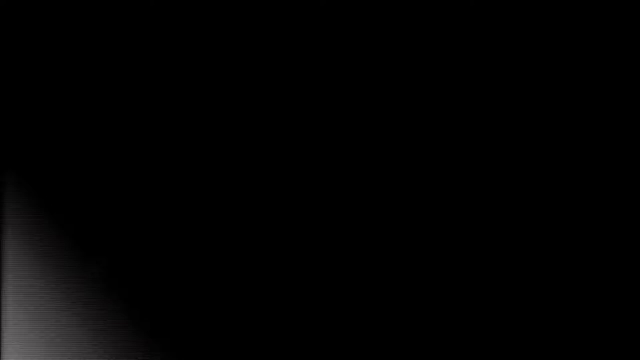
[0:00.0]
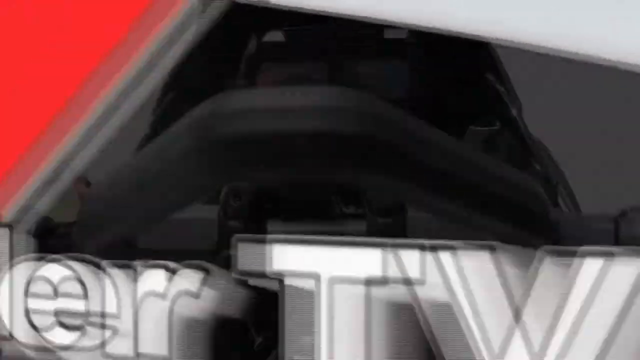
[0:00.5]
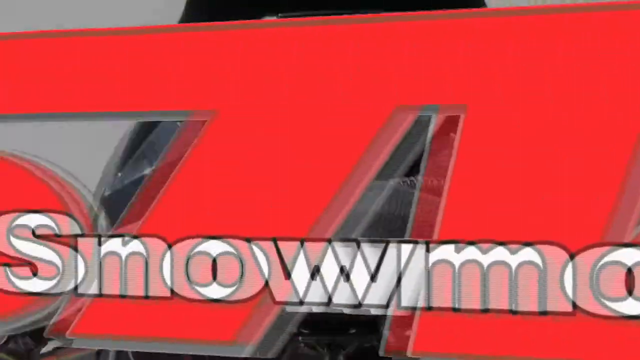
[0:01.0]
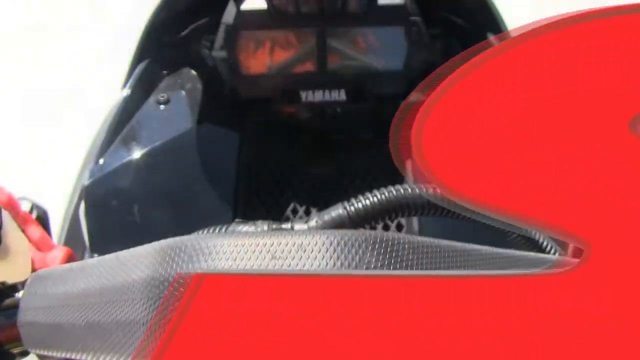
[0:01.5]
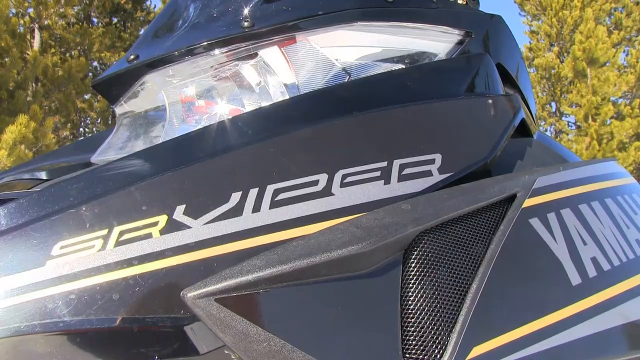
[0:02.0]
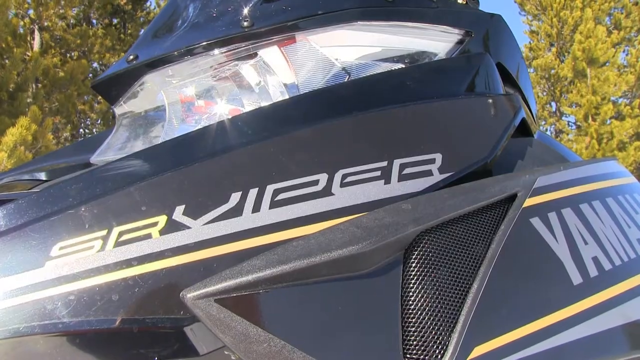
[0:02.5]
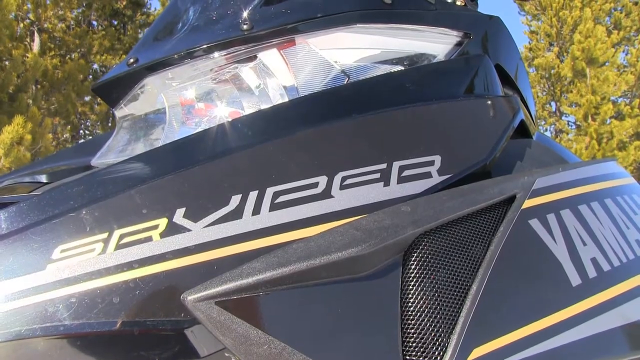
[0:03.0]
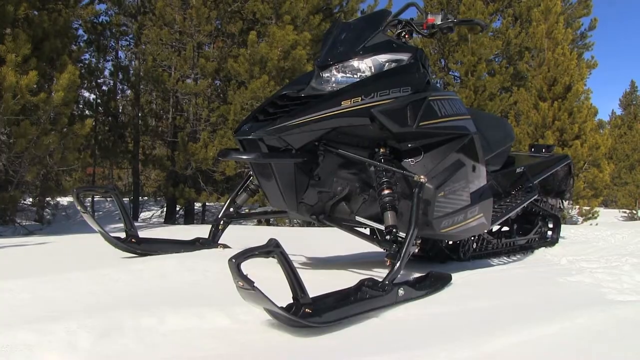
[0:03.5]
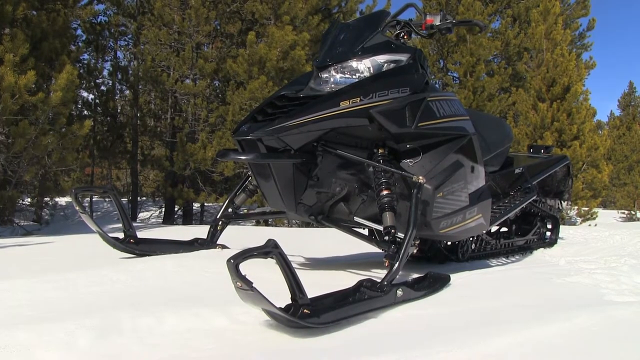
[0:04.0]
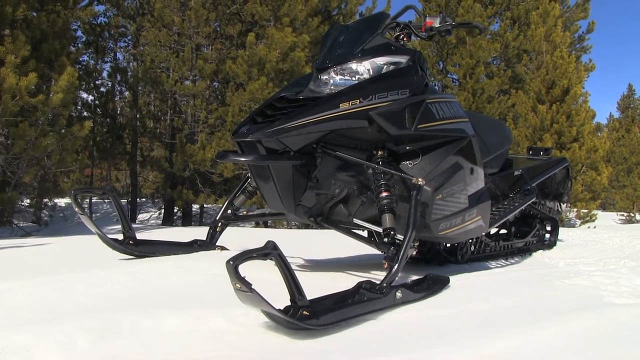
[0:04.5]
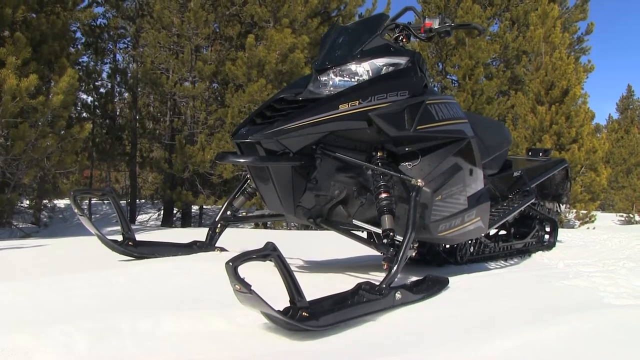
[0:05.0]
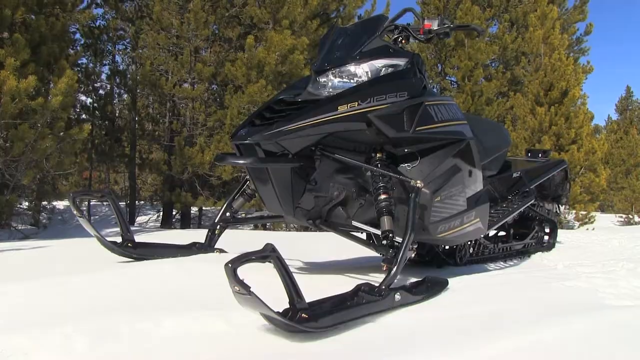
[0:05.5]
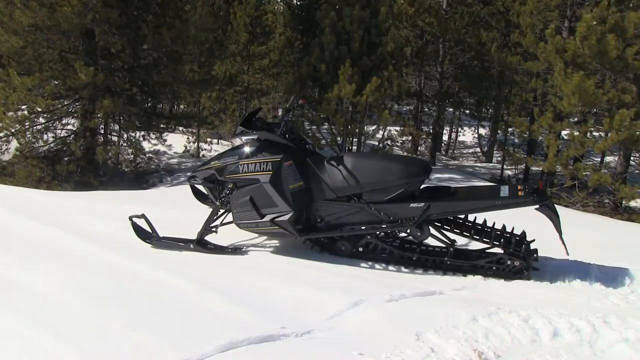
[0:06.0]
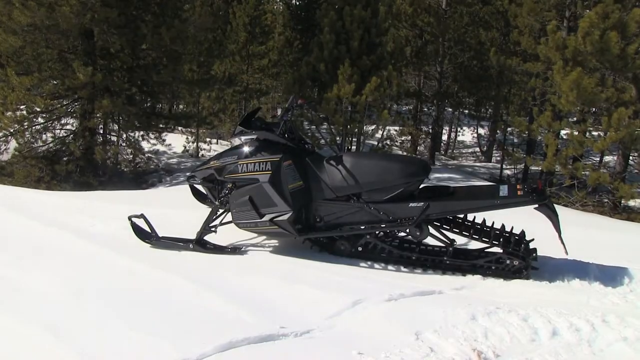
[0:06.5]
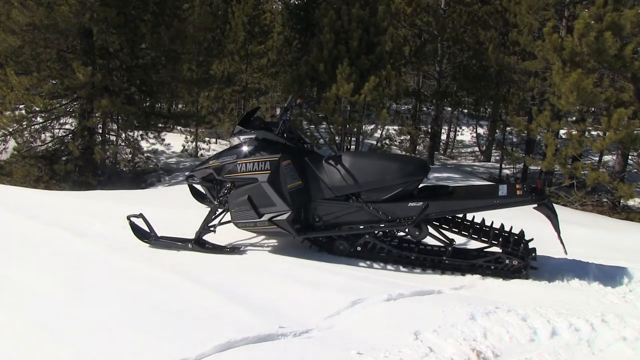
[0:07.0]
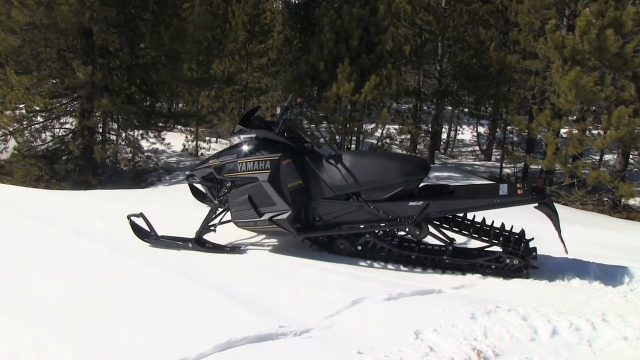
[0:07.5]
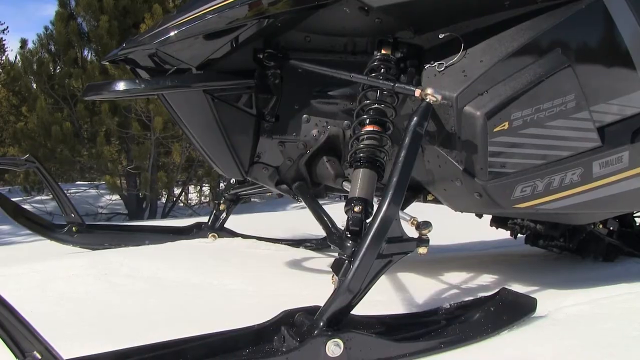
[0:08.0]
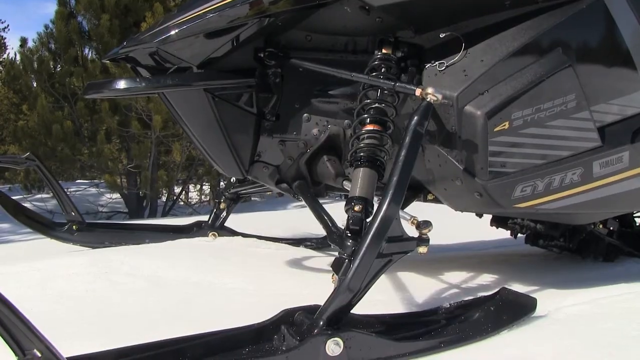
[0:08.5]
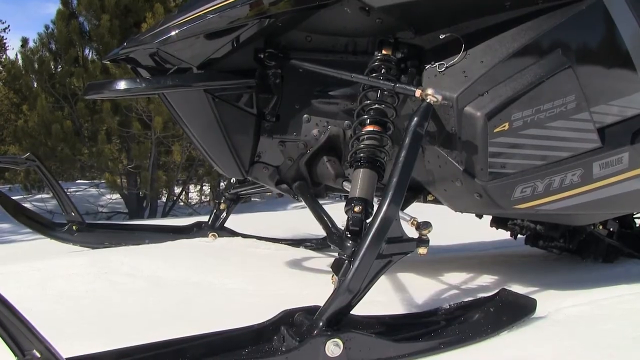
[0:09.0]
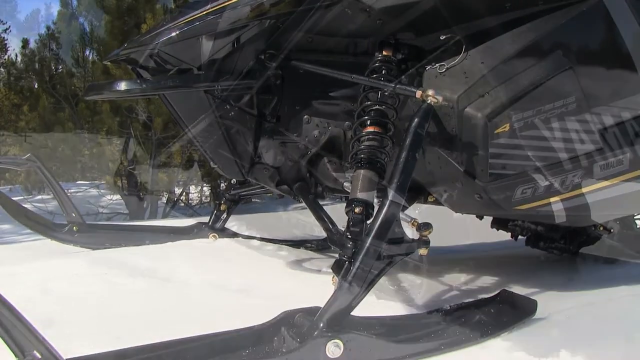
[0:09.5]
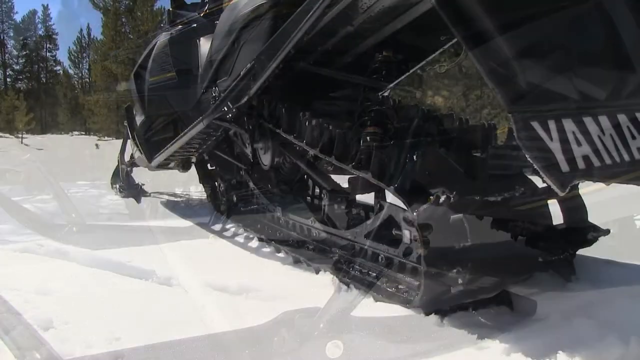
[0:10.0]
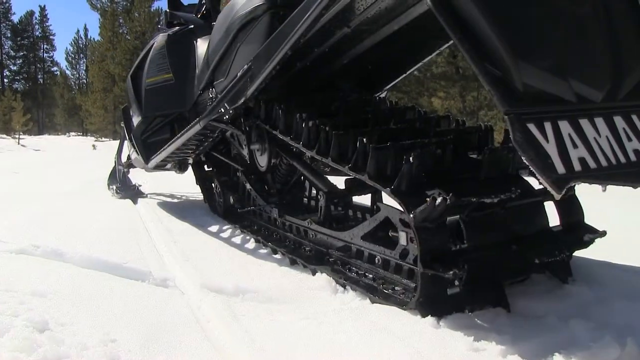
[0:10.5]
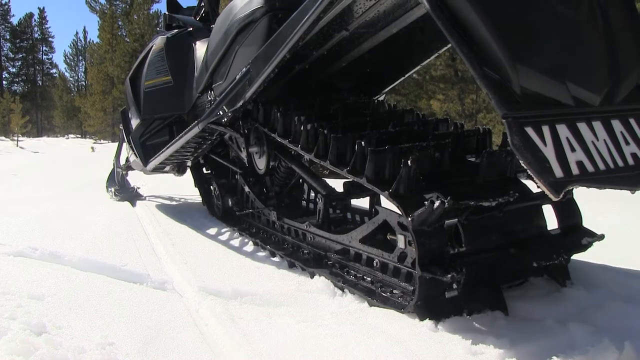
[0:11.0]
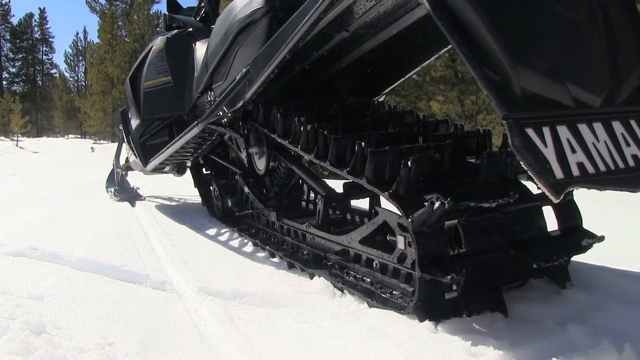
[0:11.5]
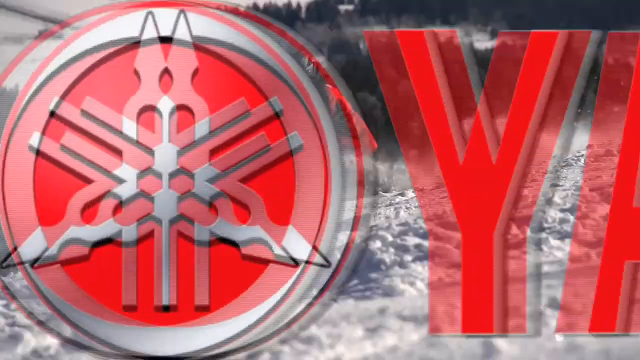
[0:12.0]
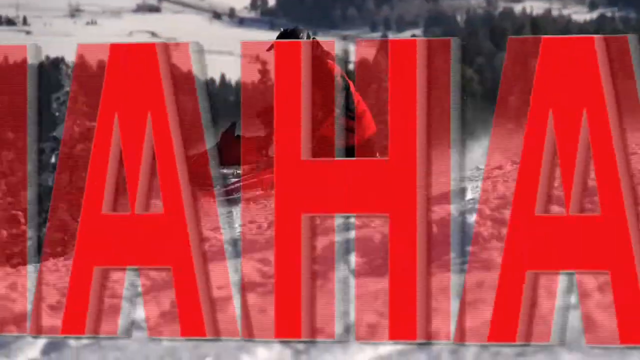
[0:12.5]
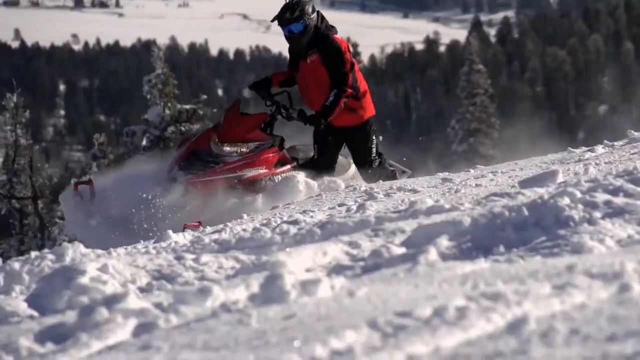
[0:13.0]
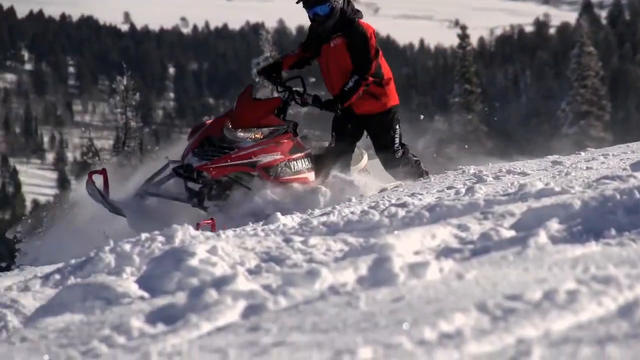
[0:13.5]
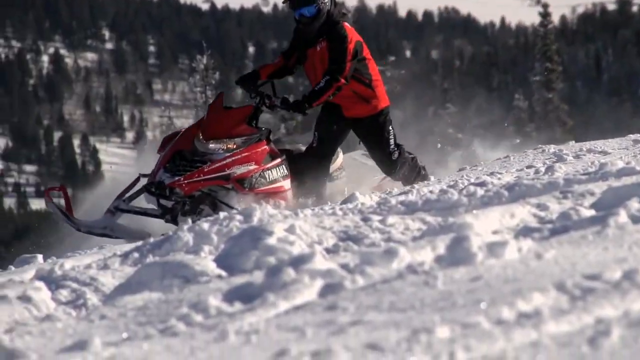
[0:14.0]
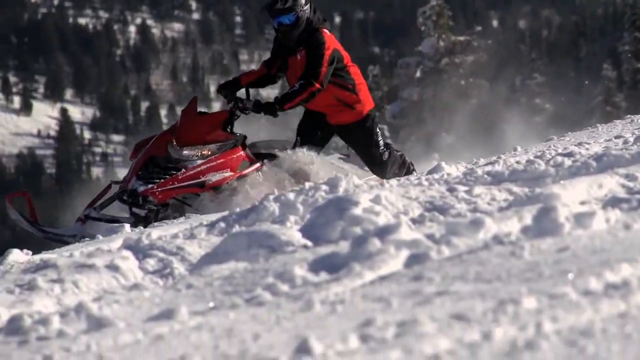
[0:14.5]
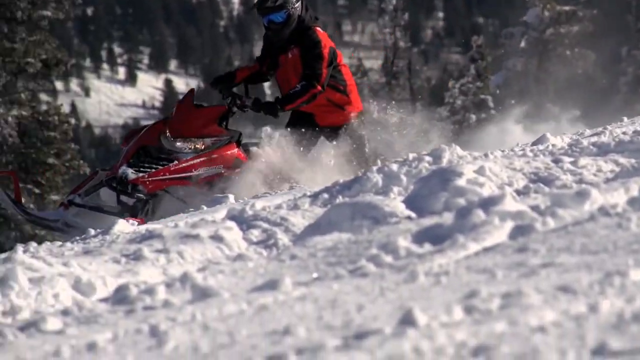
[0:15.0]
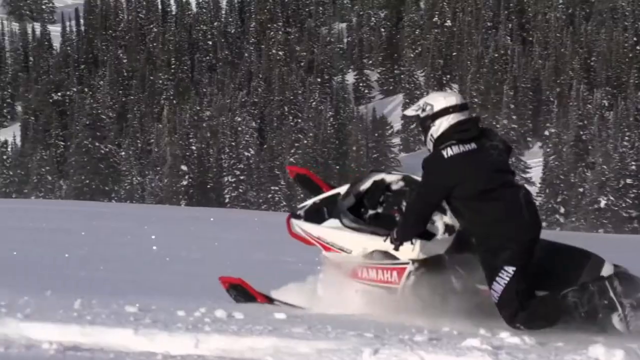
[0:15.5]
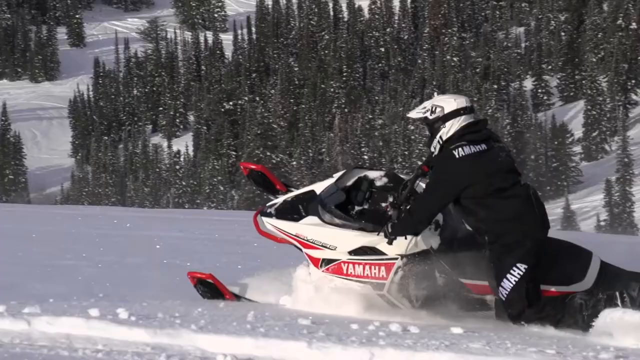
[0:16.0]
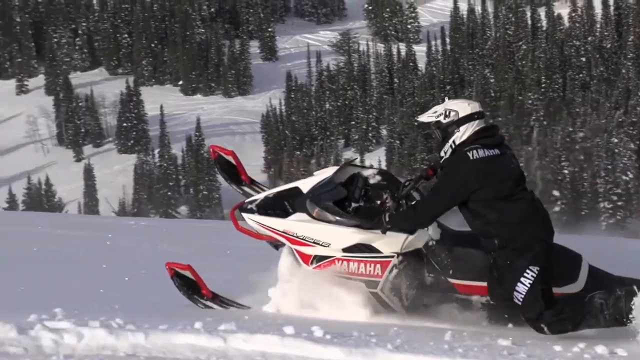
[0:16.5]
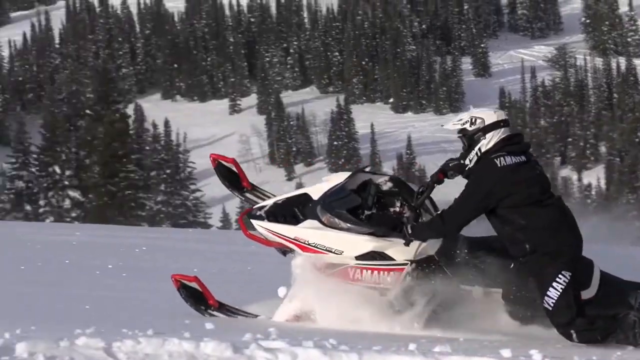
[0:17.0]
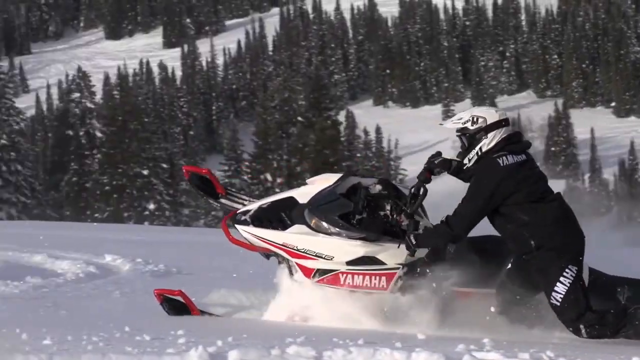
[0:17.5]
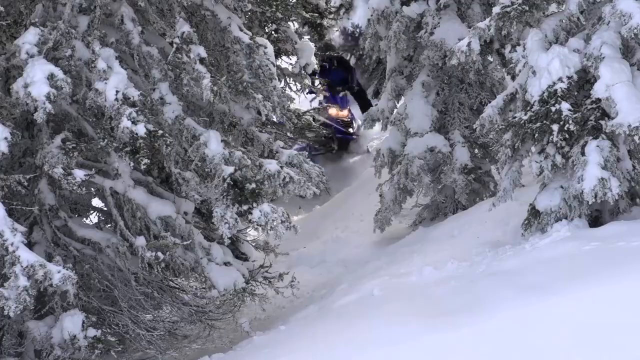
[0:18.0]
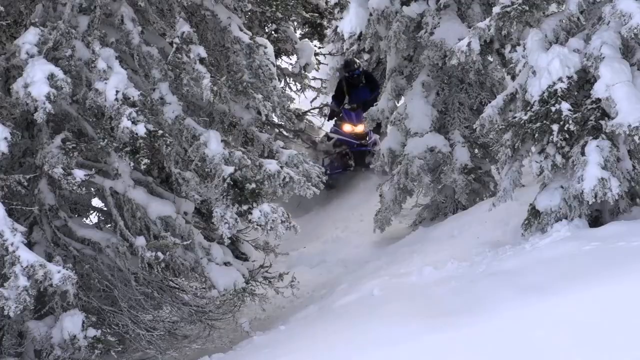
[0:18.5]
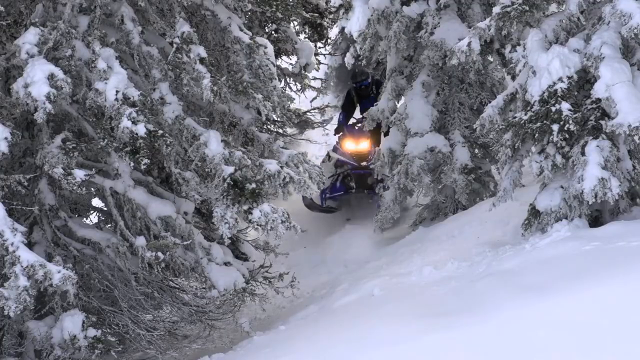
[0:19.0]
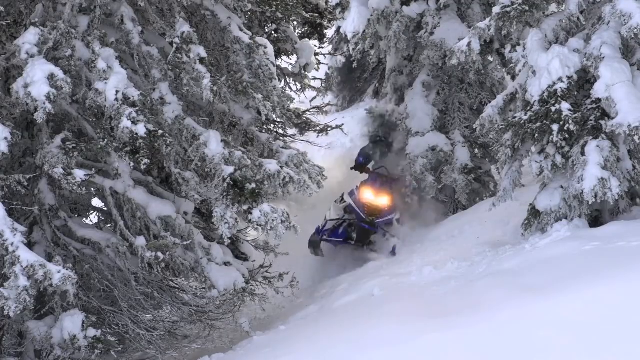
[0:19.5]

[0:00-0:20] After some quick-changing images that are hard to make out, the video shows a motorized snow machine, apparently a snowmobile. It has two black skis on the front, and the entire machine is mostly black. Snow is underneath the machine and in the background, where there are many large evergreen trees. The angle then changes to look at the side of the snowmobile, where a black track is visible on the back. Next comes a close look at the shock absorbers on the front skis, followed by a close-up of the track underneath the snowmobile. The view then switches to a snow-covered hill, where a red snowmobile is being ridden by a rider in black pants and a red shirt with black arms. He wears a black helmet and goggles or glasses that look like shades. In the far background, tons of evergreen trees go down and below the hill. Next, a white and red snowmobile appears with a rider in black pants, a black top and a white helmet.